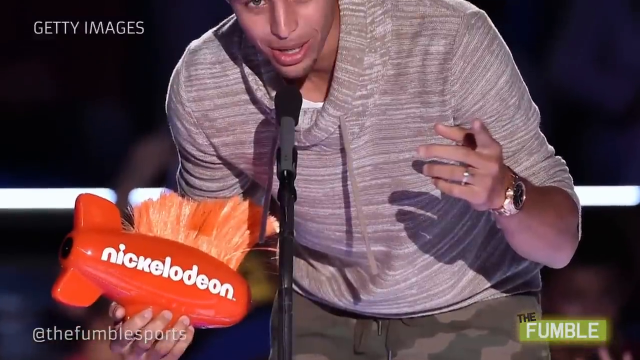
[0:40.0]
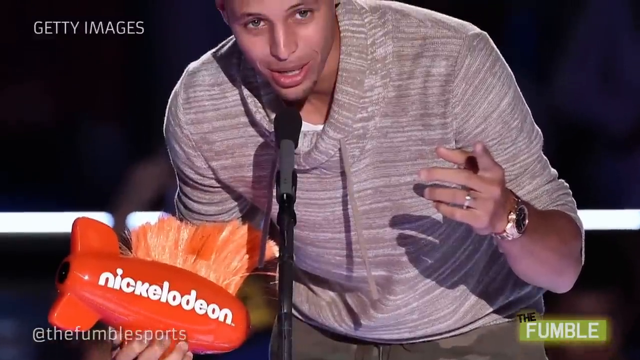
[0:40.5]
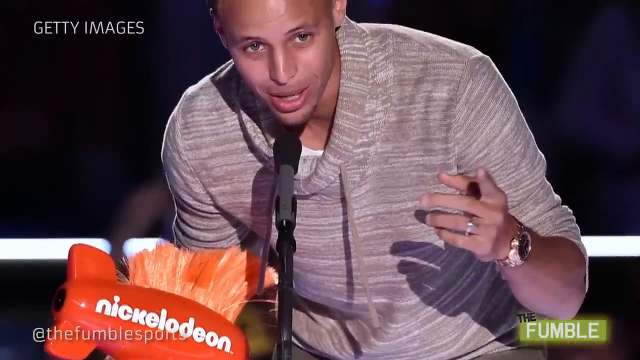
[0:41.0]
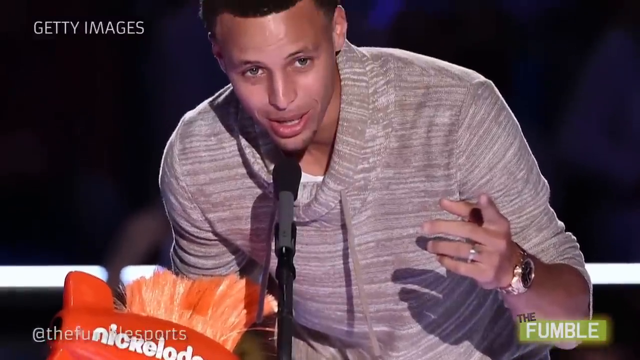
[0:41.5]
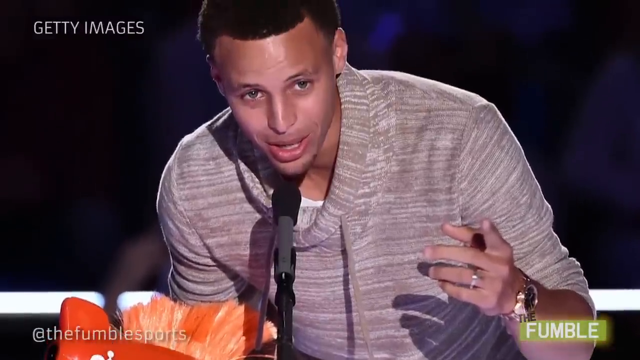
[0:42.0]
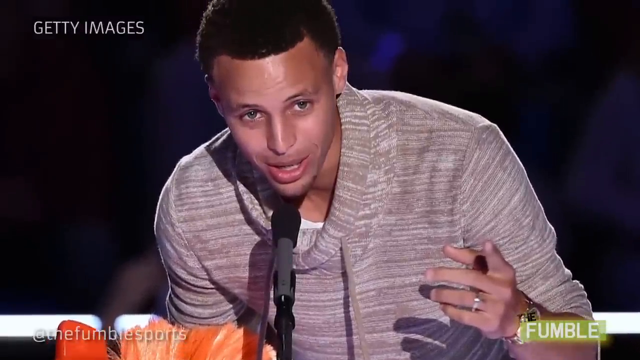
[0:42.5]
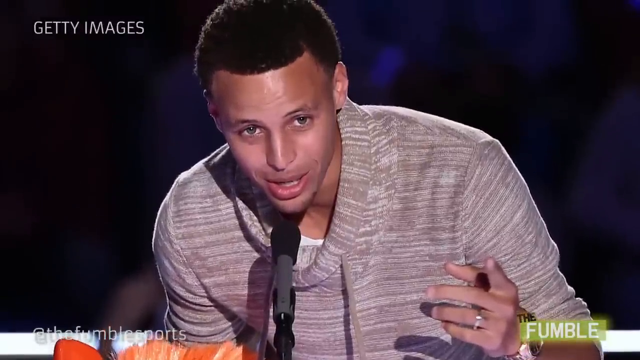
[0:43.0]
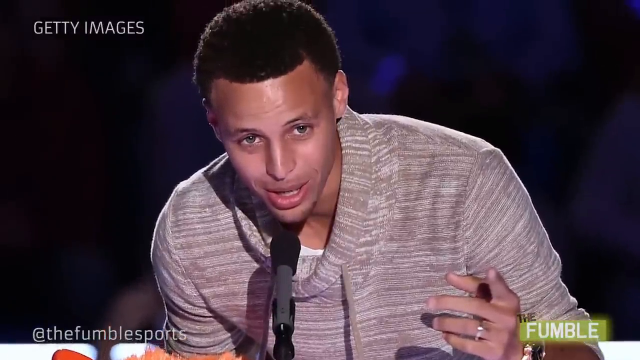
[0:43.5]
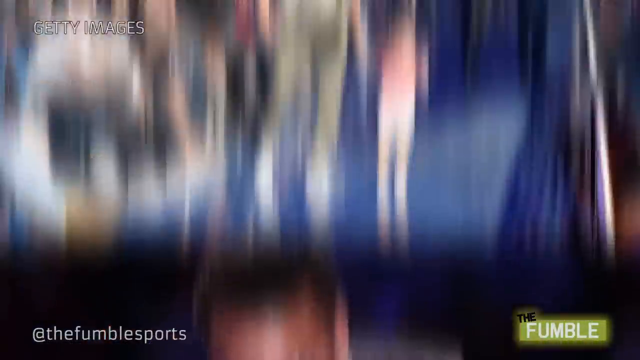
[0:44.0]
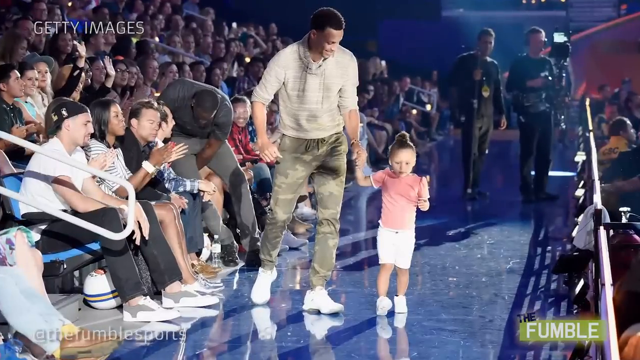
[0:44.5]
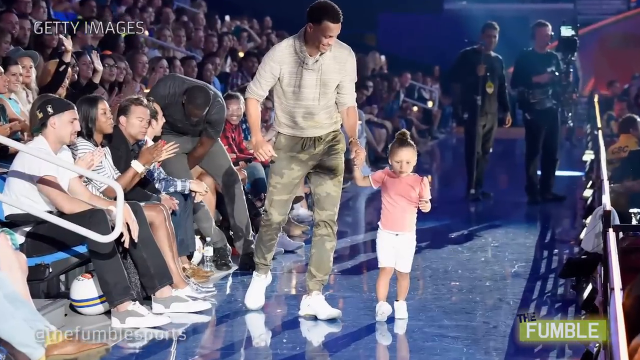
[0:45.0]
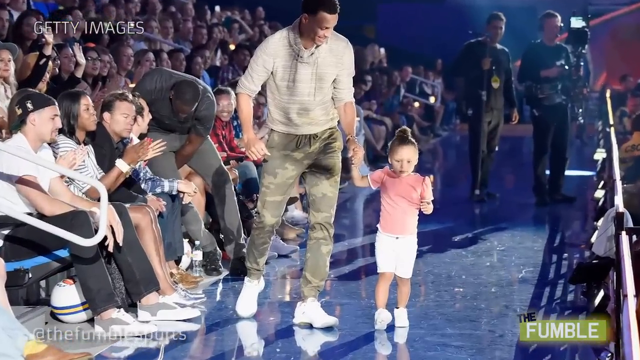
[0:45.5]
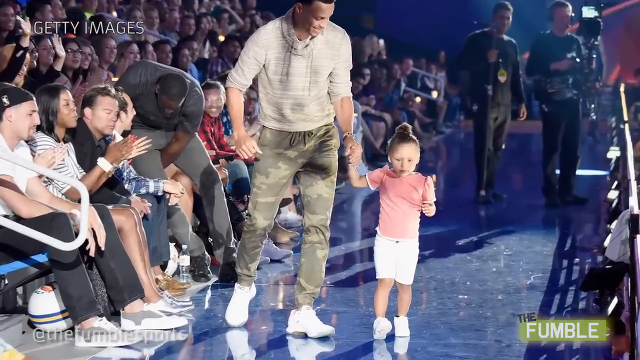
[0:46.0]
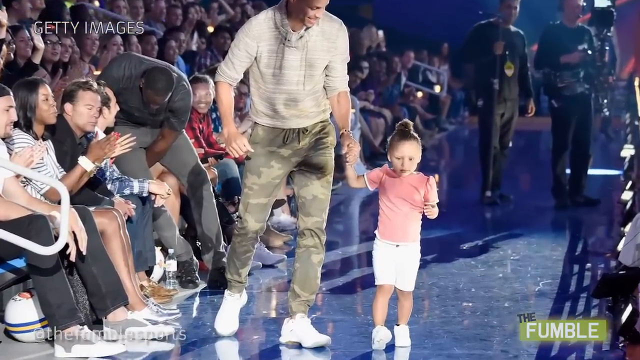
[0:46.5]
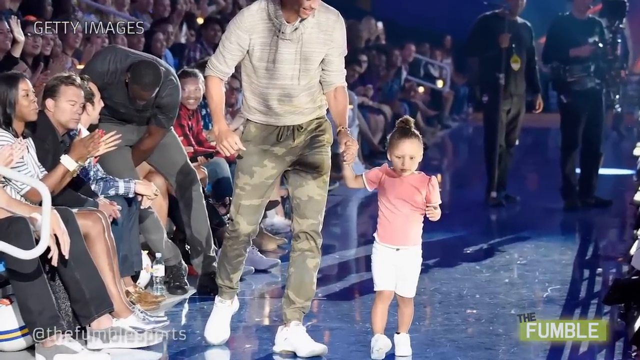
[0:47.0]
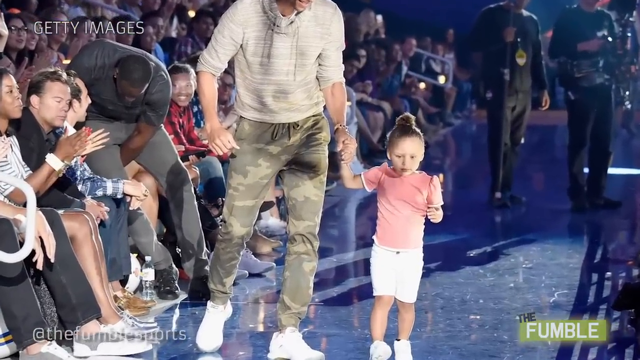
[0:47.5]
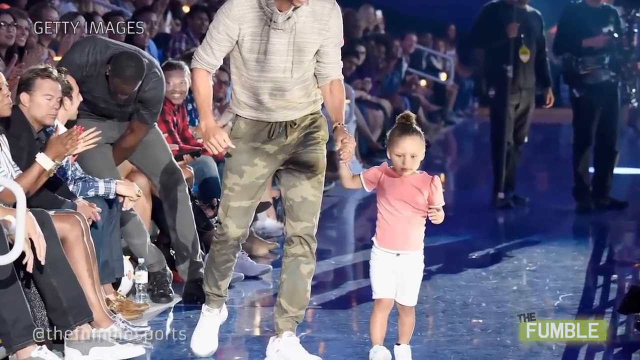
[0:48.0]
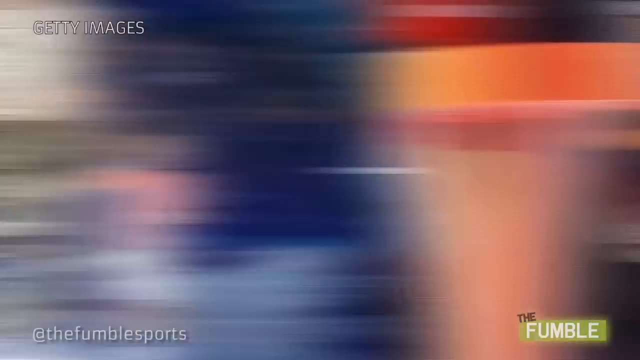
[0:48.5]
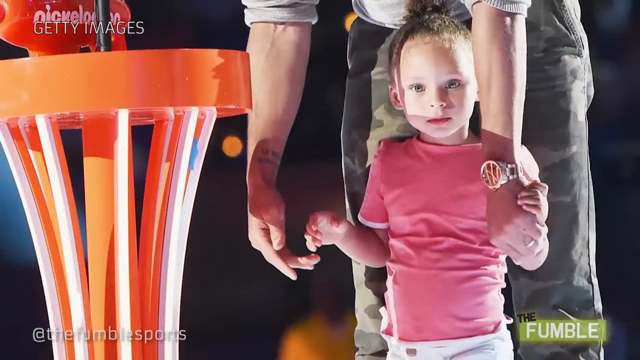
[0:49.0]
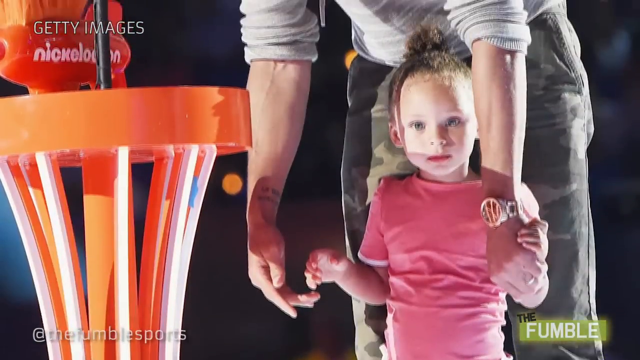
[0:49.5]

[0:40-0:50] A very tall man is up on a stage, bent over and speaking into a microphone. In his right hand he clutches an orange object shaped like a dirigible that says "Nickelodeon." His left hand points toward the audience, and he appears to be smiling. This is a still photo by Getty Images, whose logo is in the top left. The camera pans all the way up to his face. Another still photo follows, showing the man walking with what looks like his daughter, who is tiny and probably about four. They walk in front of an audience in what looks like some type of stage environment.